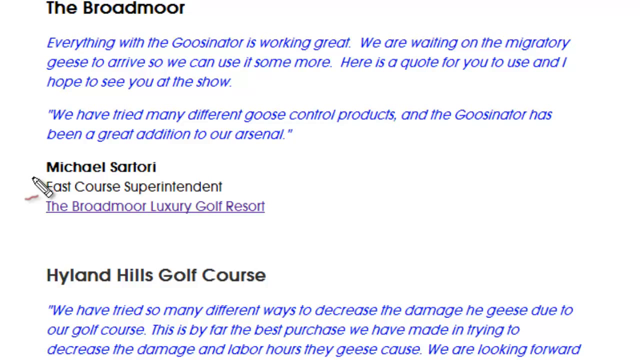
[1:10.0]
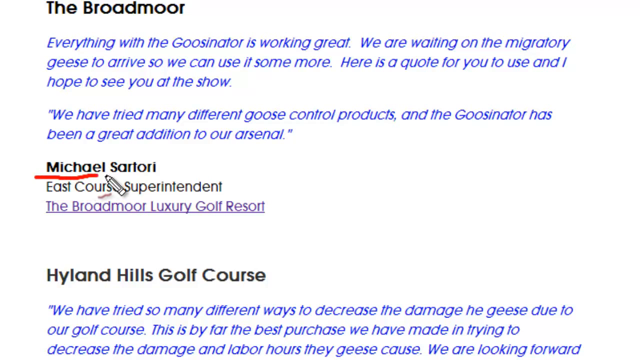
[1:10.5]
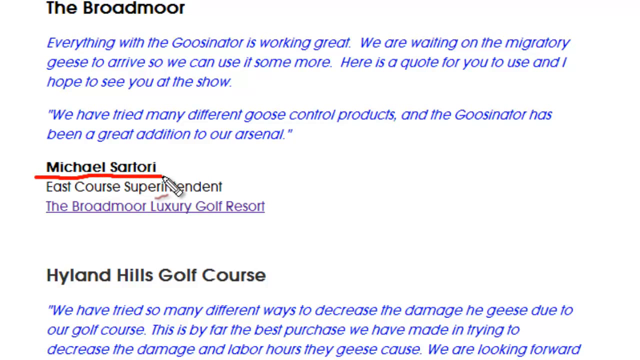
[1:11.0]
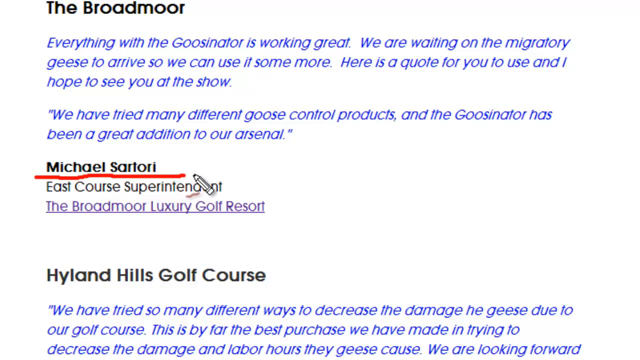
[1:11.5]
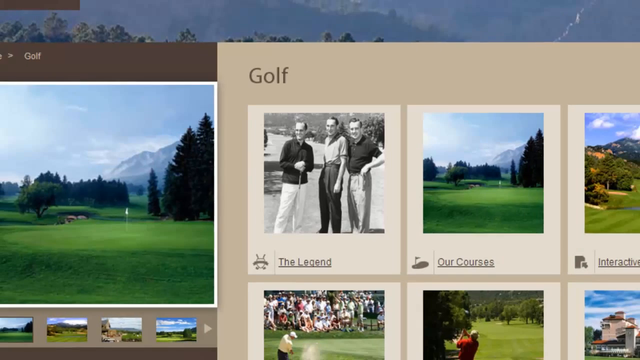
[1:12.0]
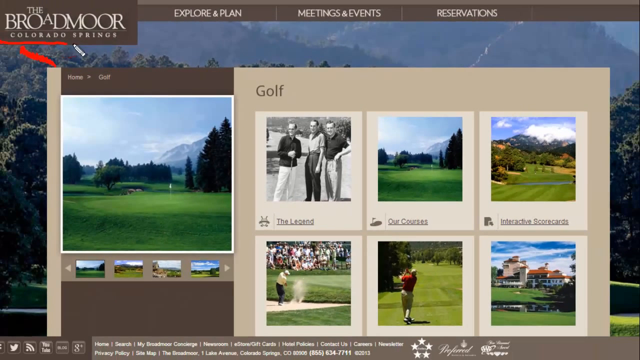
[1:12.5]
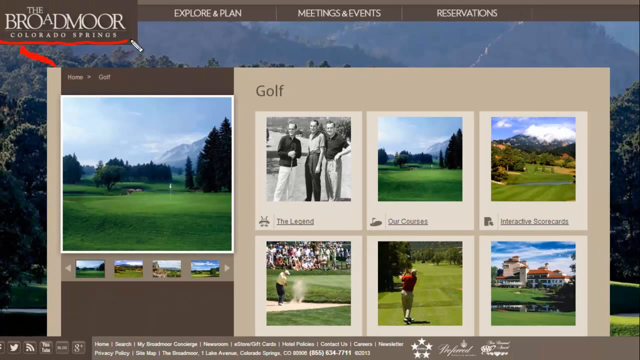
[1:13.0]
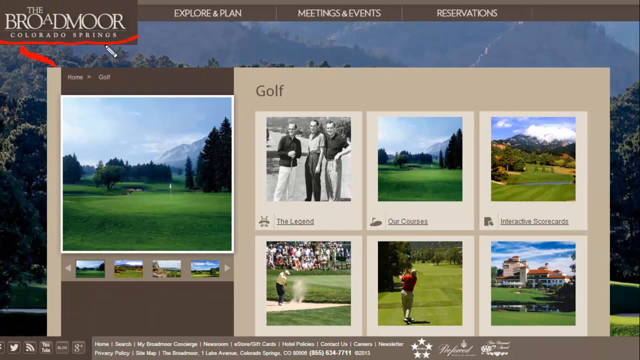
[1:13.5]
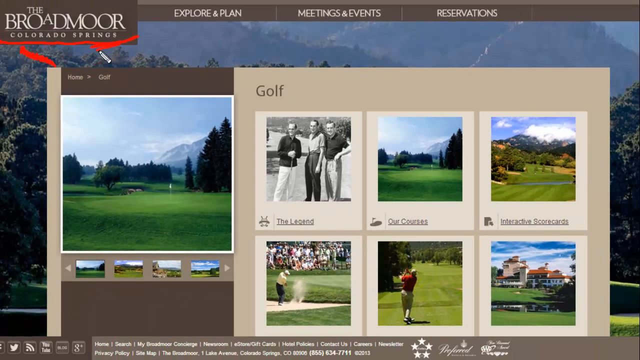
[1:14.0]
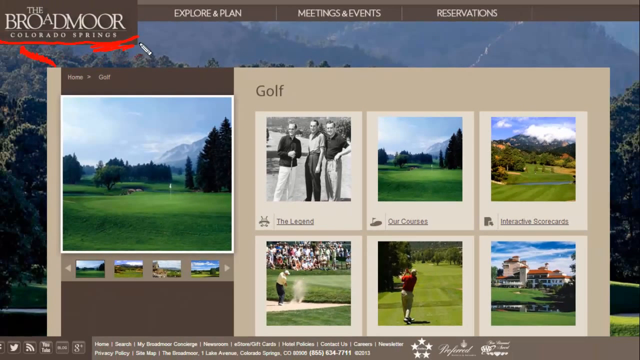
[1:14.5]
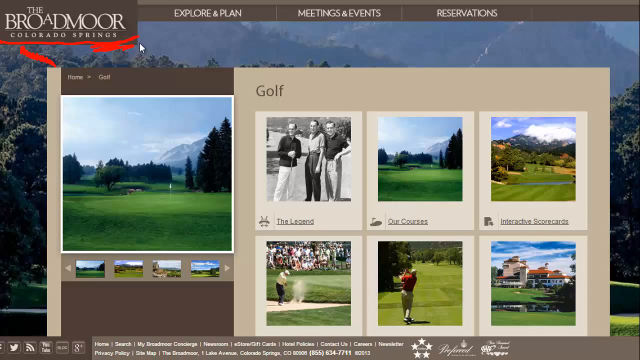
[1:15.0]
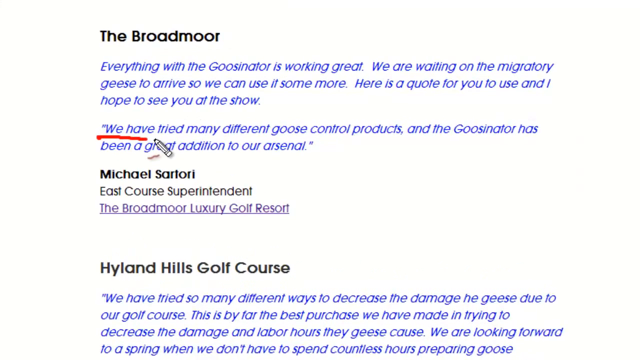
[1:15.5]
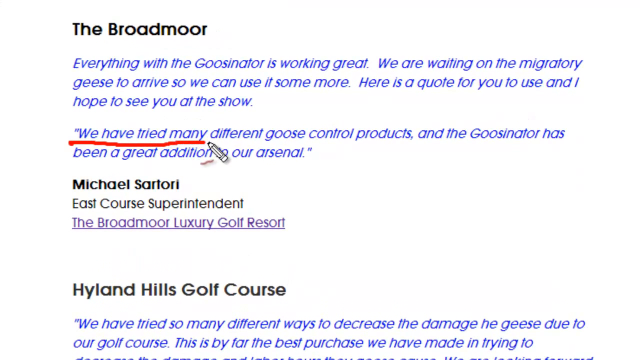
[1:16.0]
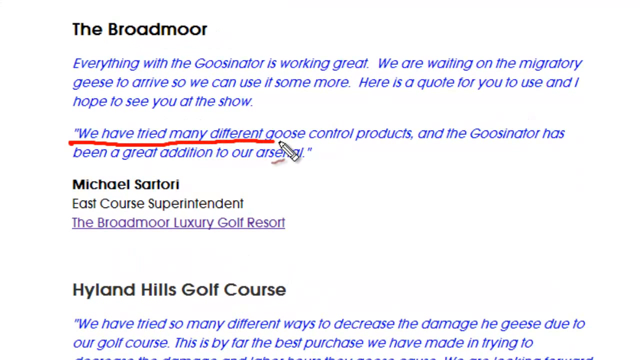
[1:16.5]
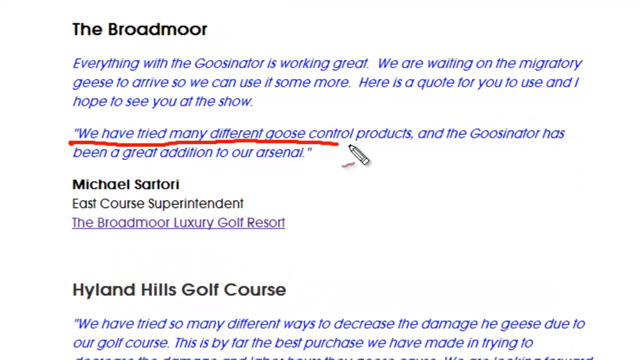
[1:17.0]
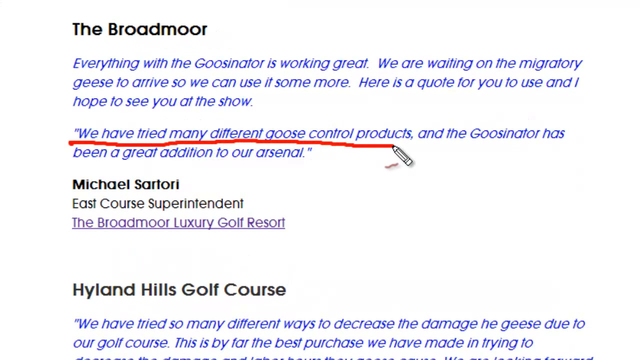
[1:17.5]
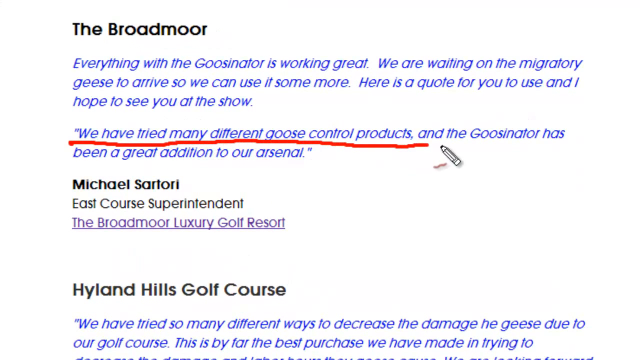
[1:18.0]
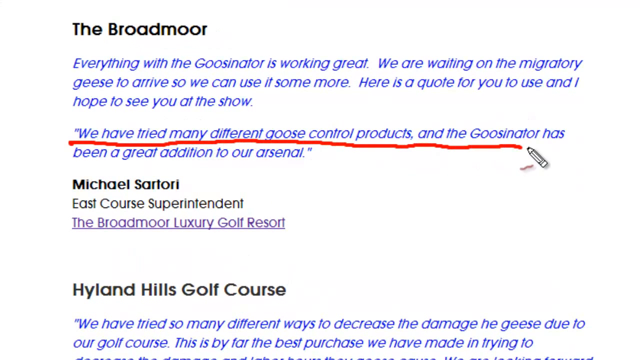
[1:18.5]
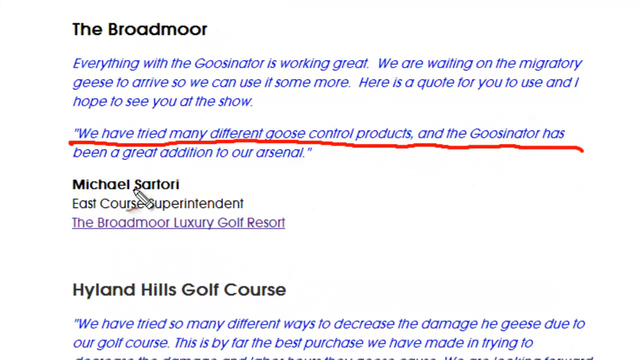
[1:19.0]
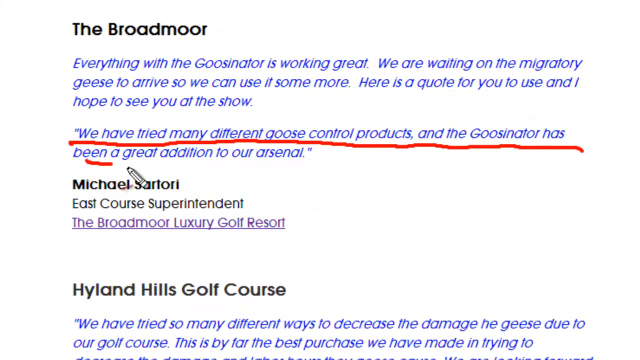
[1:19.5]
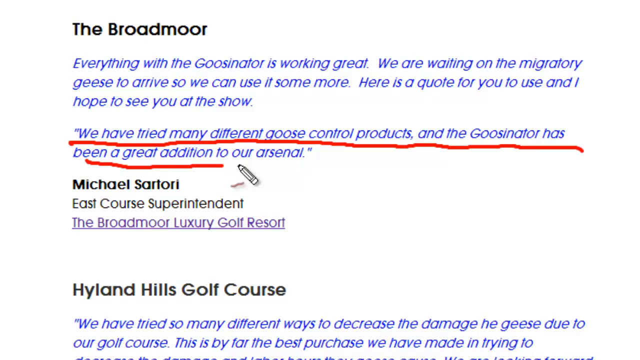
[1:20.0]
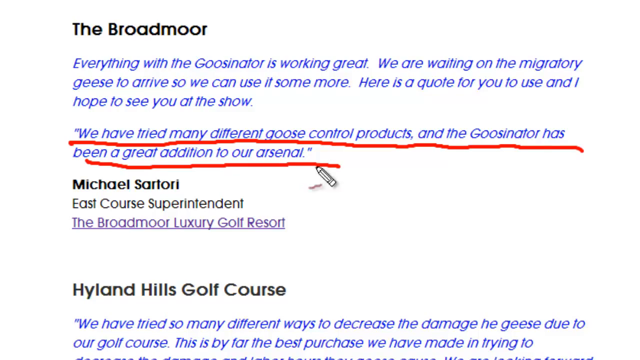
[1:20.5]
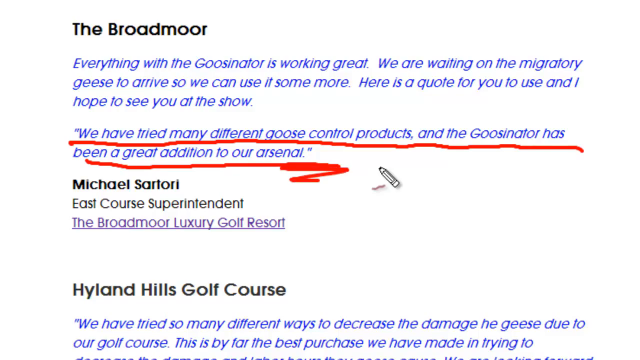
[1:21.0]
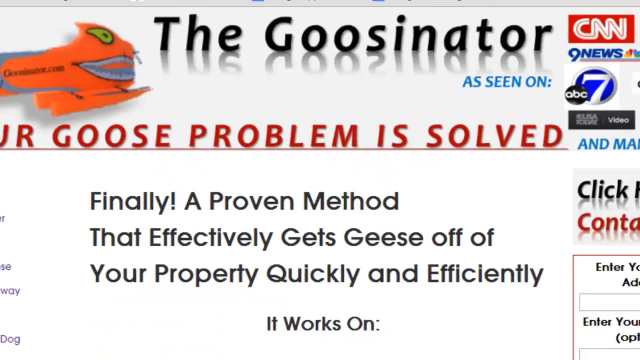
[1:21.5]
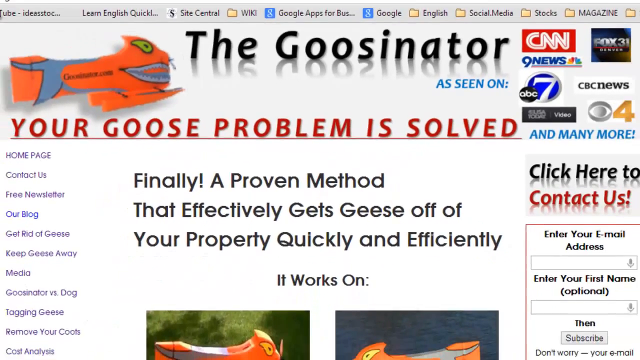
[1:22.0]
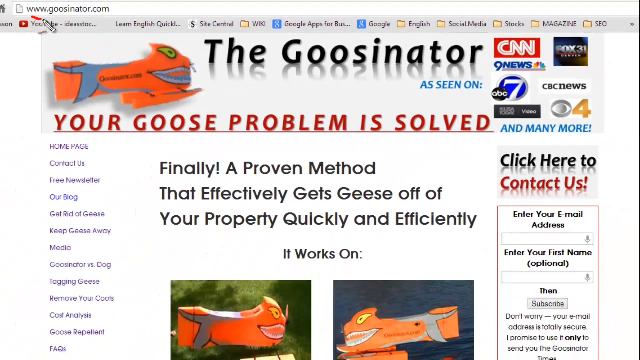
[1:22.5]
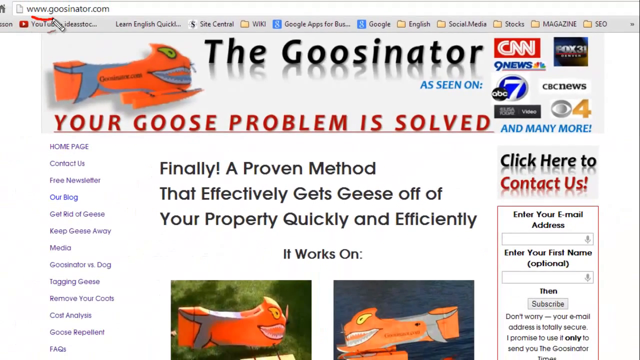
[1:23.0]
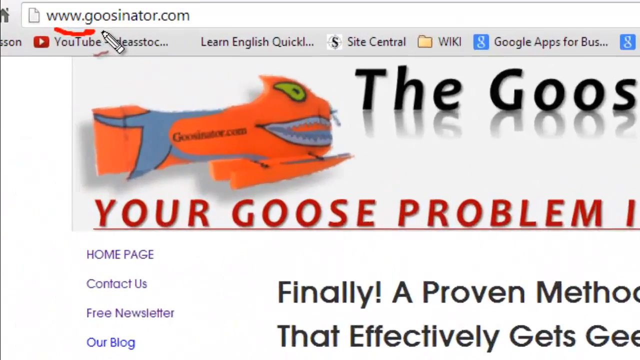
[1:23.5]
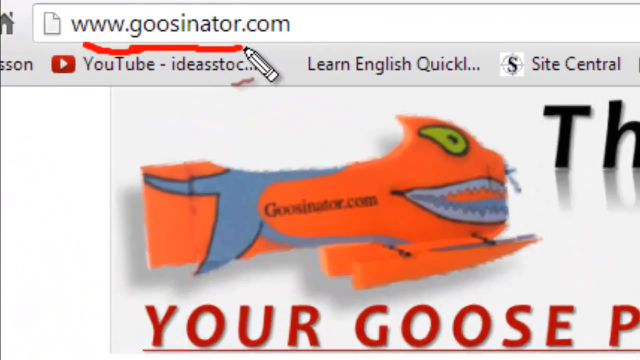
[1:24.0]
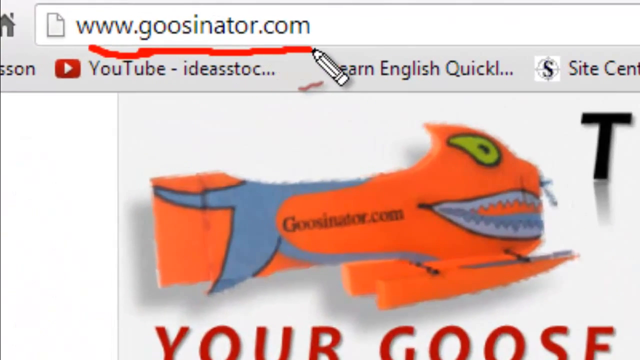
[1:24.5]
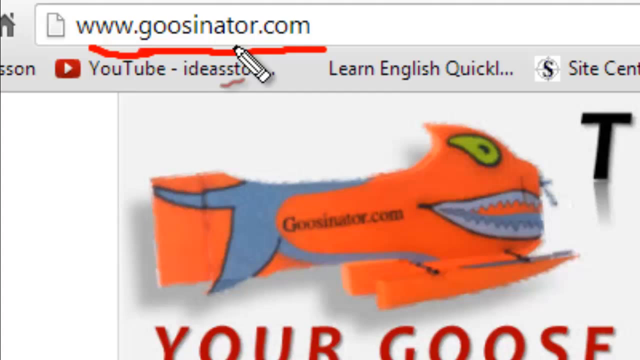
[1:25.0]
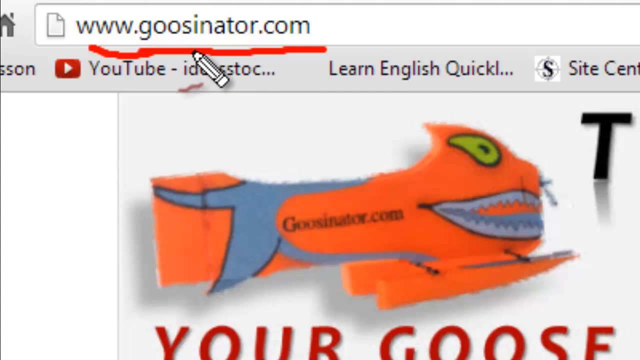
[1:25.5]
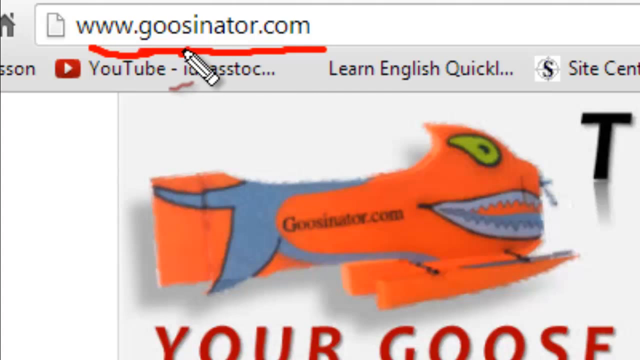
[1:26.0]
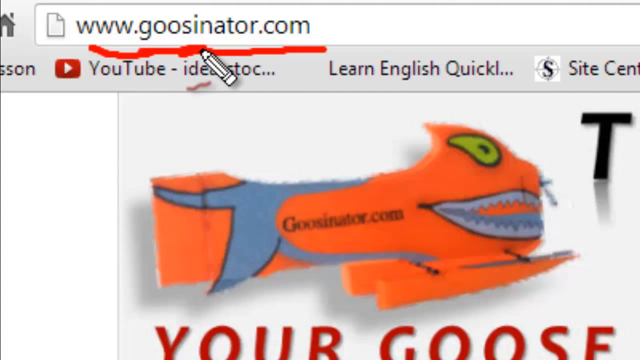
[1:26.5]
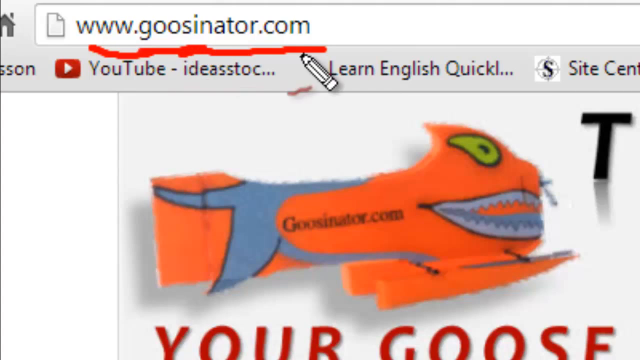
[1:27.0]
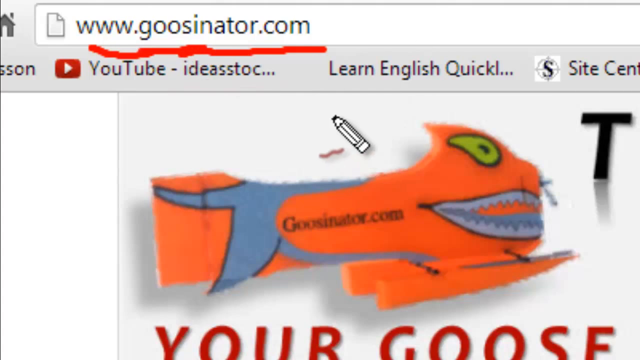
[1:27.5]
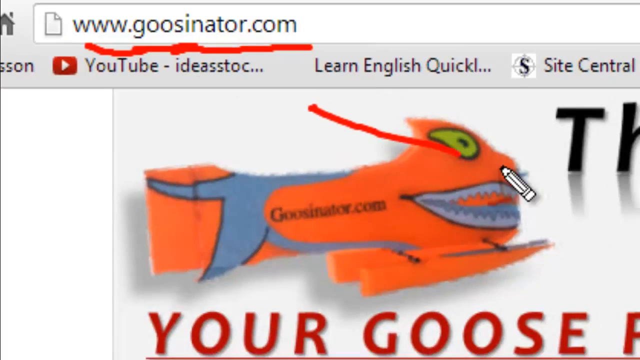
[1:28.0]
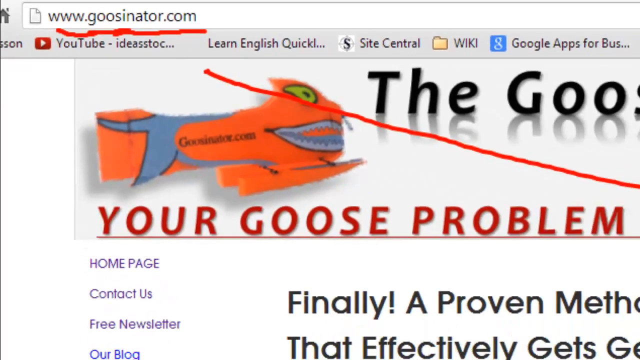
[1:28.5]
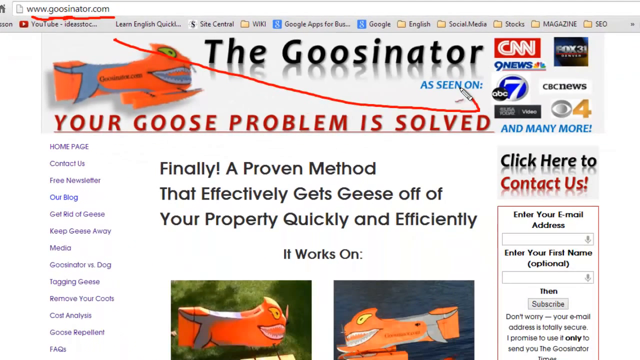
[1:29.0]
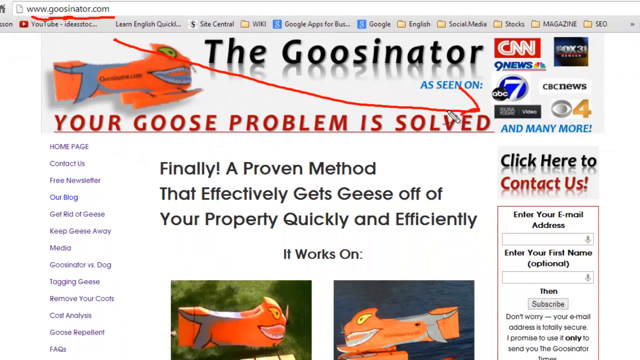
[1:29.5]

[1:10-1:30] A pen icon underlines the name "Michael Sartori", an East Coast Superintendent at The Broadmoor Luxury Golf Resort; the name is written under what looks like a review by Michael. What is possibly another review is below it on the same page. The video transitions to what is potentially the homepage of the Broadmoor Colorado Springs website, featuring images in square frames, and the same pen icon highlights the website logo at the top left corner of the page. The video returns to Michael Sartori's review, and the pen icon highlights its last sentence. Next is the homepage for The Goosinator, featuring what looks like an animated image of a goose, mainly in orange, links to other pages on the website, some text, and the logos of a number of popular TV channels such as CNN, CNBC and ABC. The video zooms in on the website's address bar at the top left corner of the screen, and the pen icon underlines it in red before drawing a long arrow pointing at the section with the TV channel logos.